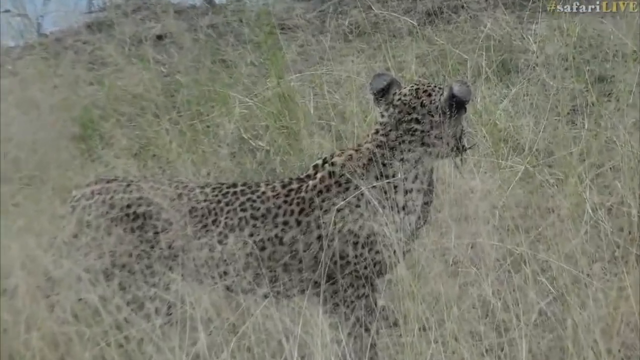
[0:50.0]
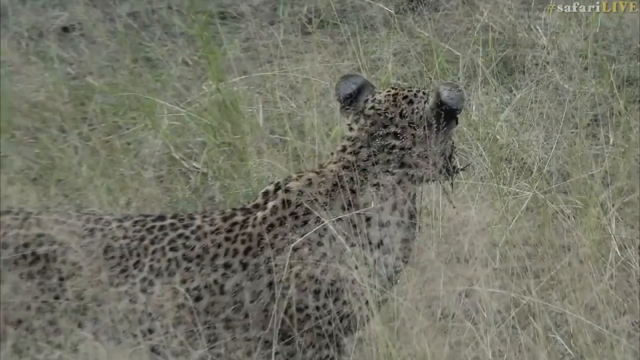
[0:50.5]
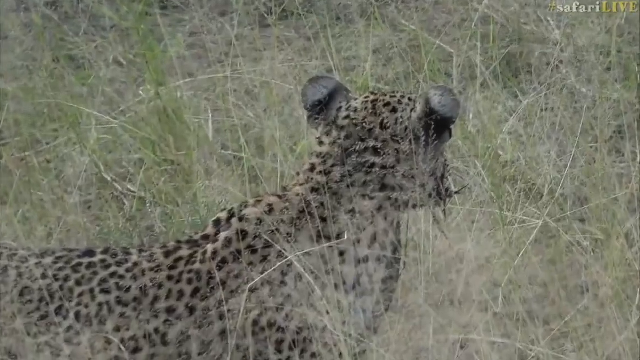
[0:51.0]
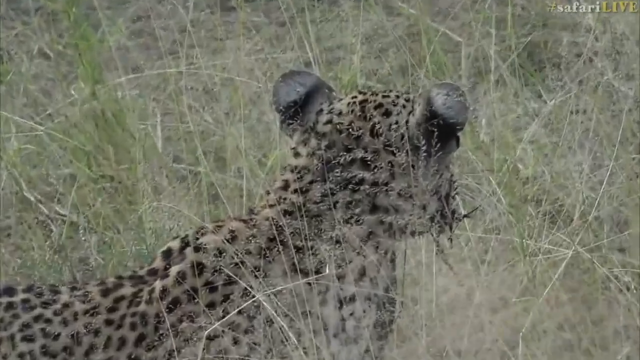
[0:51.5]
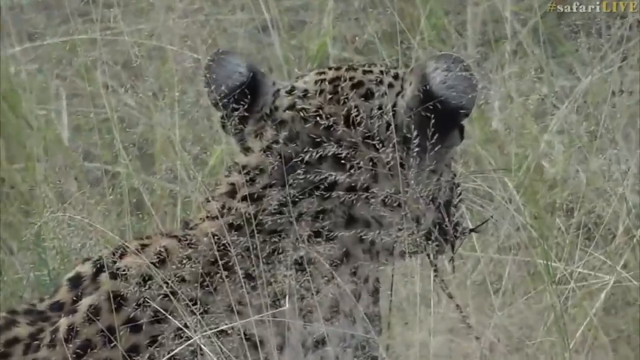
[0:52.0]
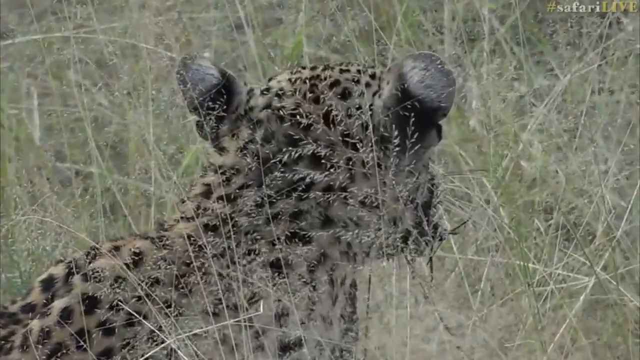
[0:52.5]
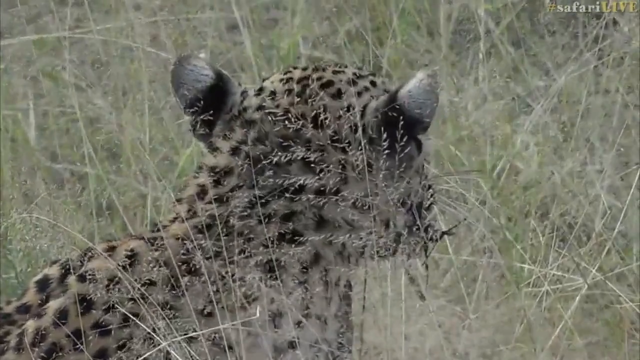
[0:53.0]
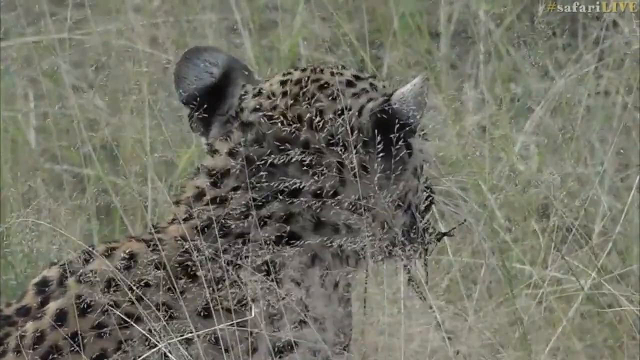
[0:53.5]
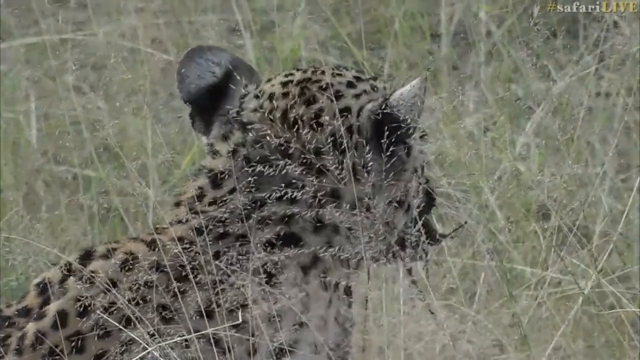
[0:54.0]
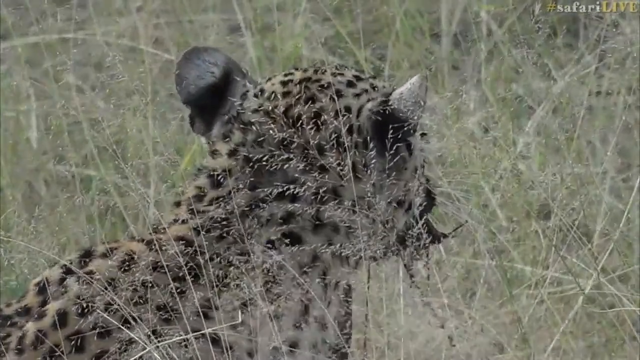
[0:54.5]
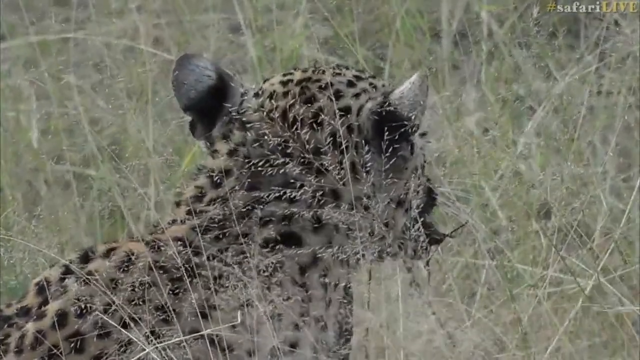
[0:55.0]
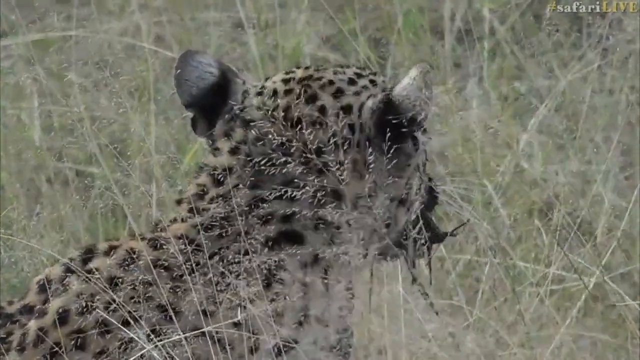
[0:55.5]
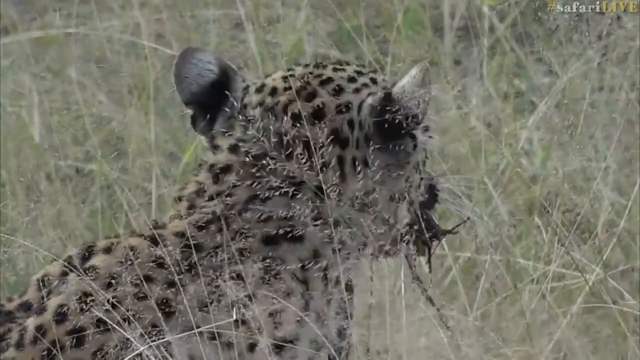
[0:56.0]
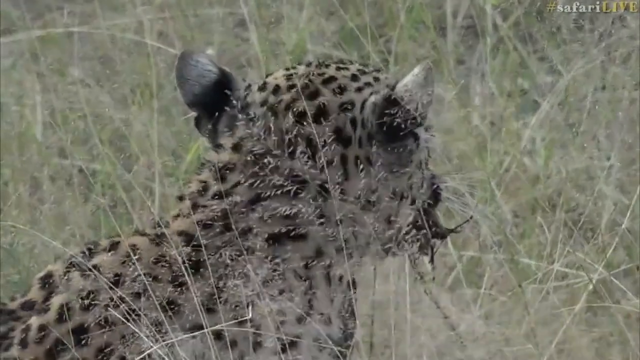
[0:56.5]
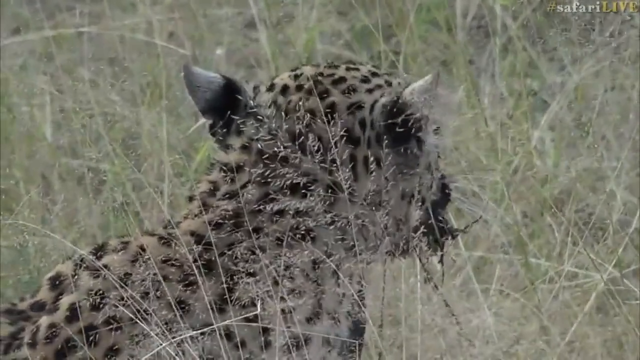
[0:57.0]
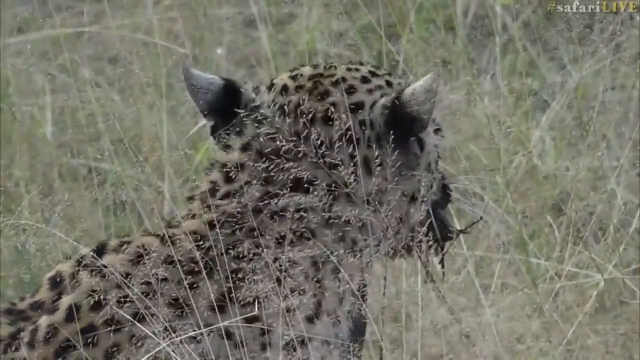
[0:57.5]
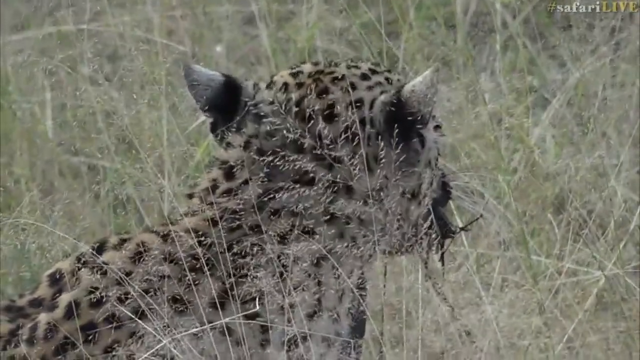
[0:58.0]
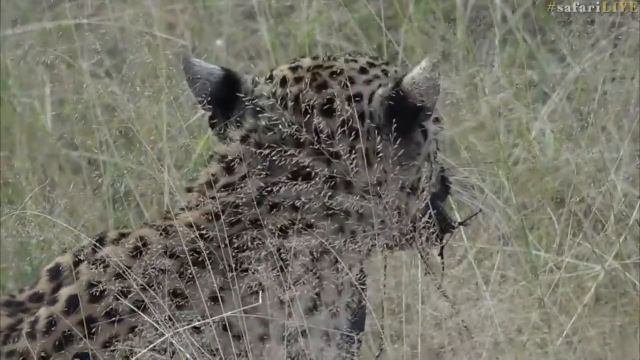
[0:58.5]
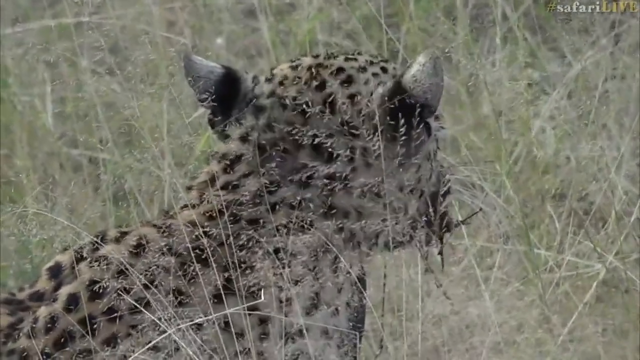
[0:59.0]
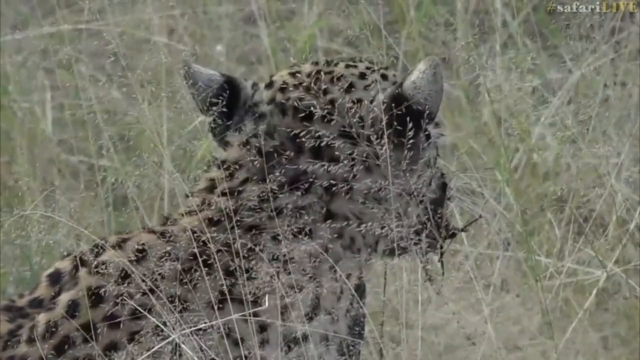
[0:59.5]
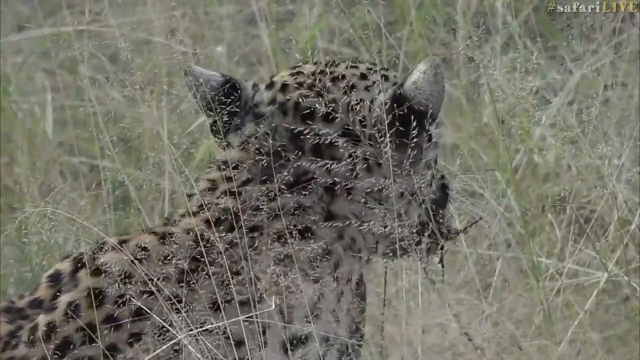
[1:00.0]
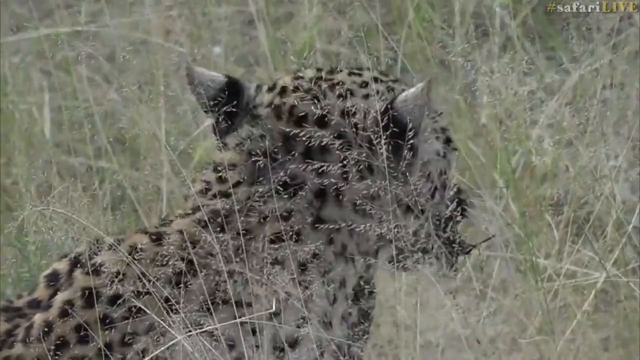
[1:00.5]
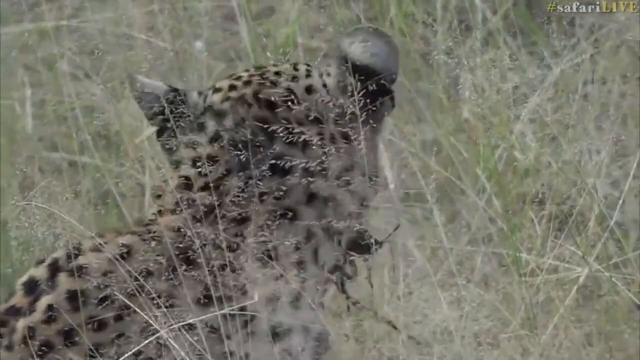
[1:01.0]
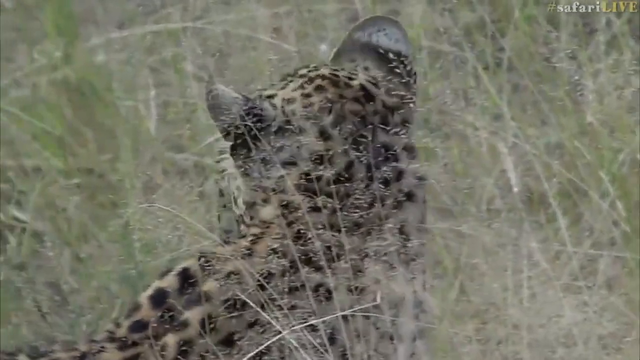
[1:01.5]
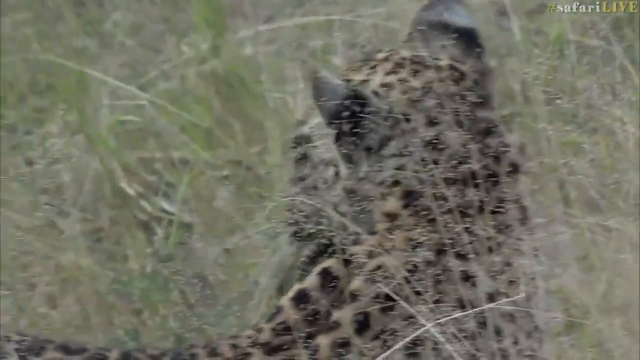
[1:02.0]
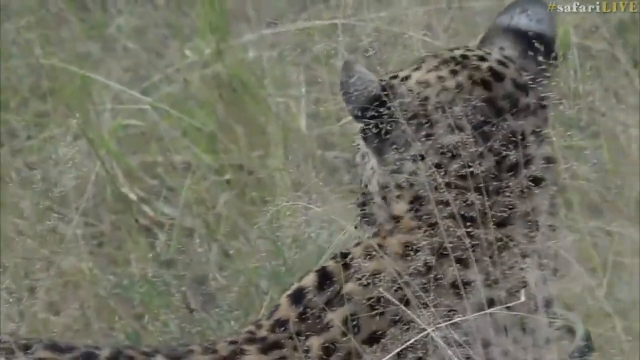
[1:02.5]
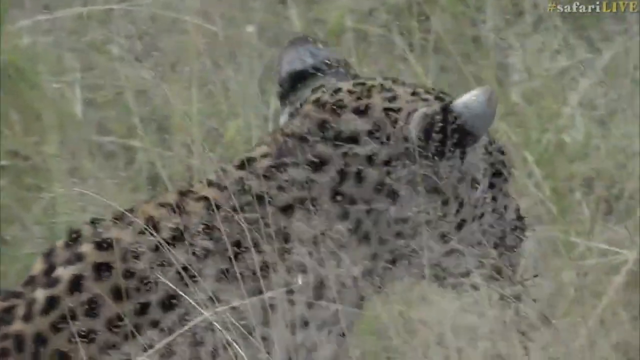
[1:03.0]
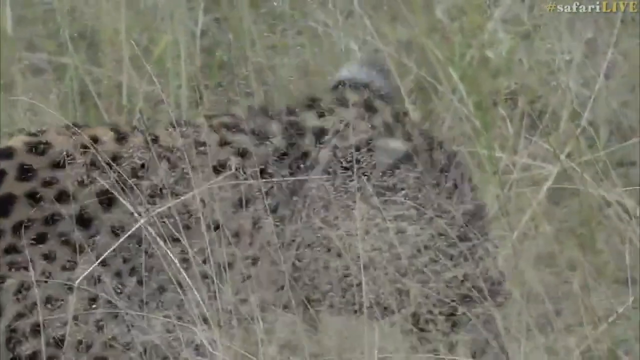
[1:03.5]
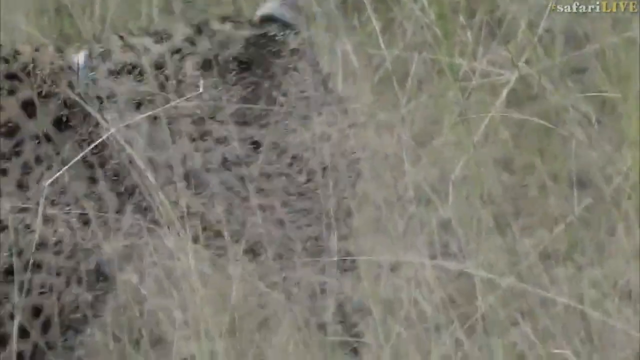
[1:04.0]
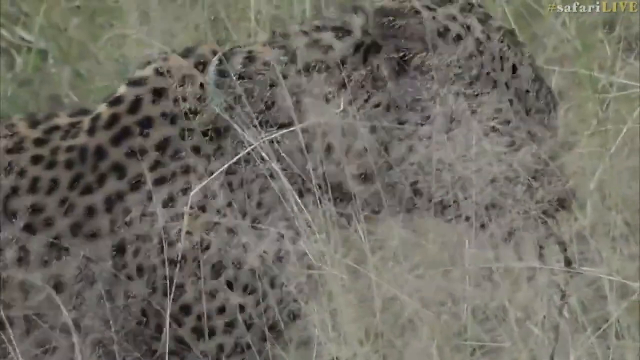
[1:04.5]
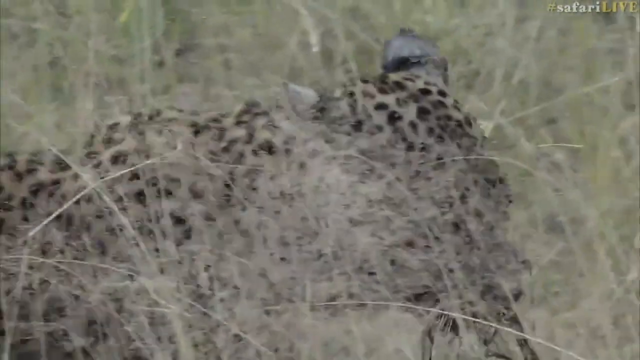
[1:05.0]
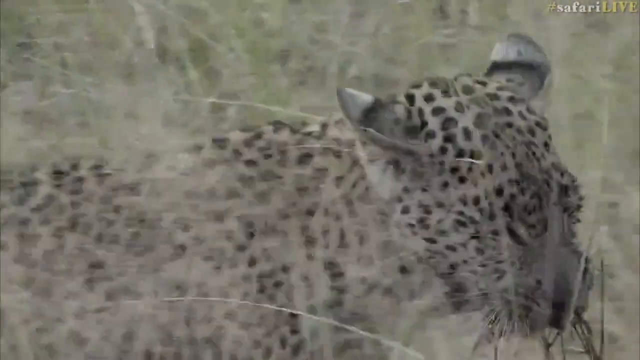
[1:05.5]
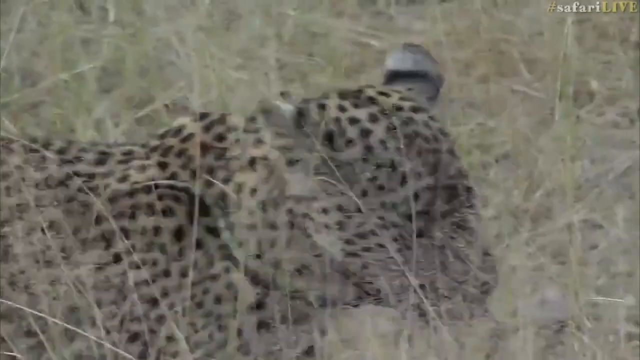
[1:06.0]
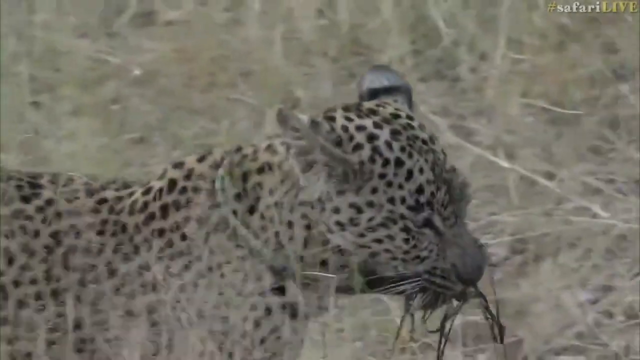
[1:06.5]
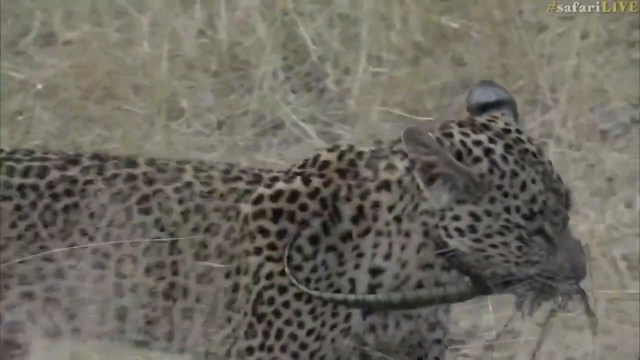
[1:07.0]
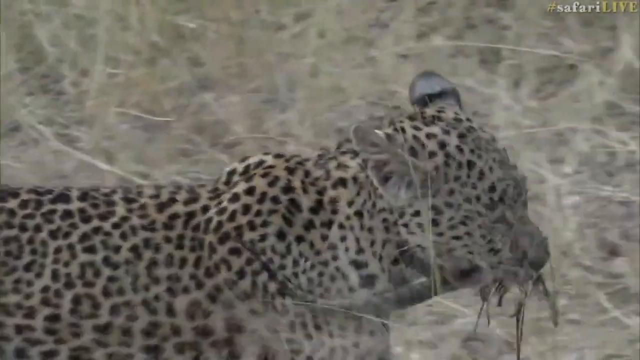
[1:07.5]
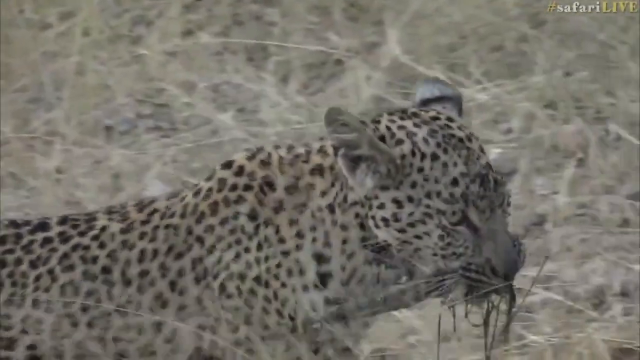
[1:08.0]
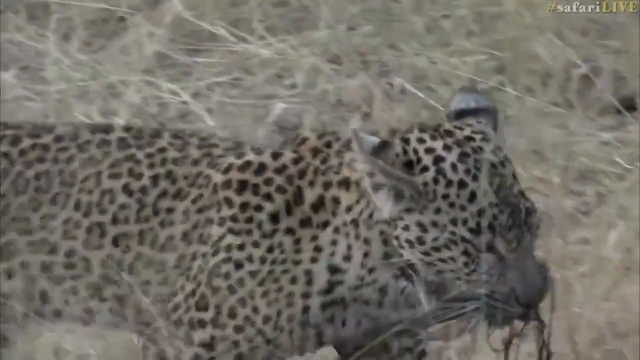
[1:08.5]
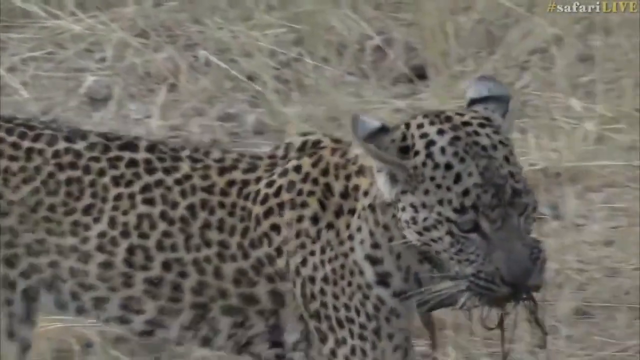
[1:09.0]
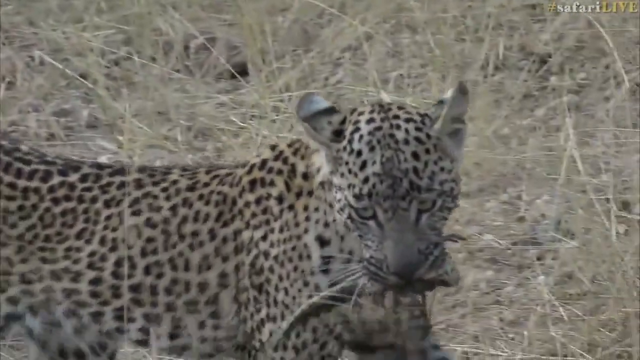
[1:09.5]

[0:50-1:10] The camera slowly zooms in on the cheetah as it stands focusing on the river. There is grass, green and brown. The cheetah stands still holding a fish in its mouth, then moves slowly toward the camera. The animal seems very focused as it holds the fish in its mouth. The picture is somewhat clear, enough to identify the kind of animal, what it is holding in its mouth, and the place it is in, and the zoom makes the animal and the fish easier to see. After standing still for a while, the cheetah moves off in another direction without letting go of the fish.